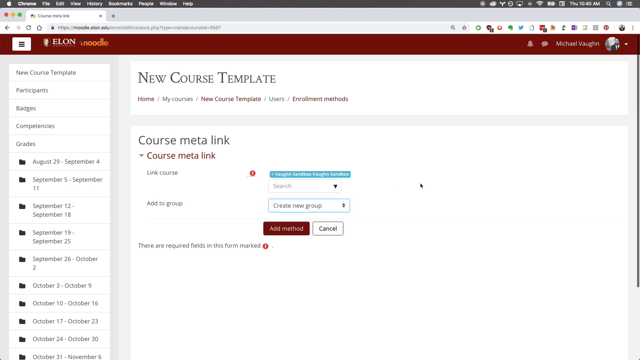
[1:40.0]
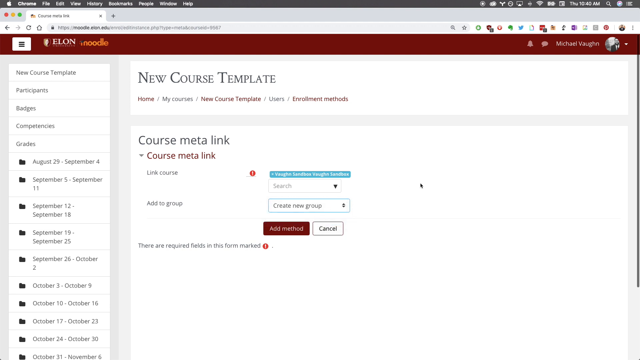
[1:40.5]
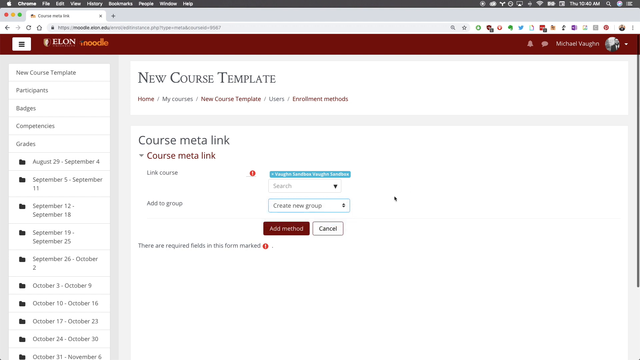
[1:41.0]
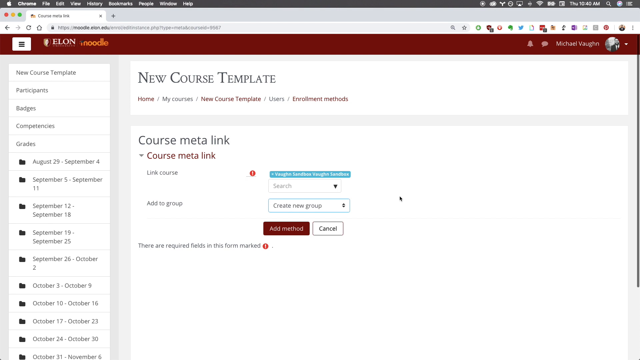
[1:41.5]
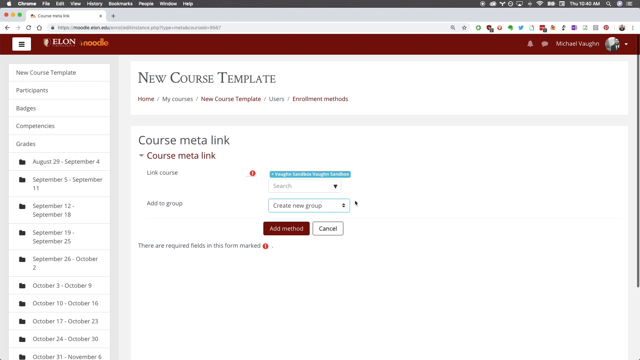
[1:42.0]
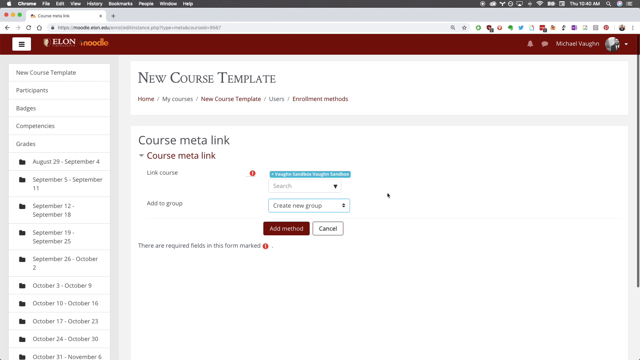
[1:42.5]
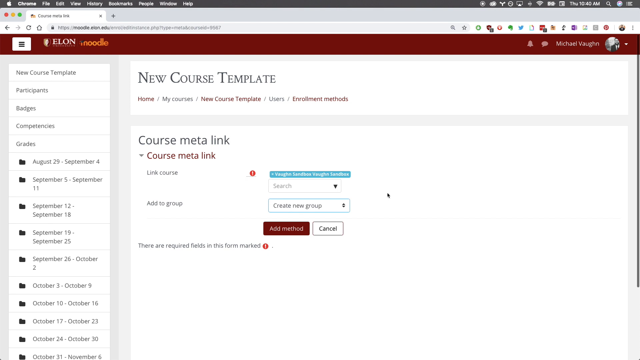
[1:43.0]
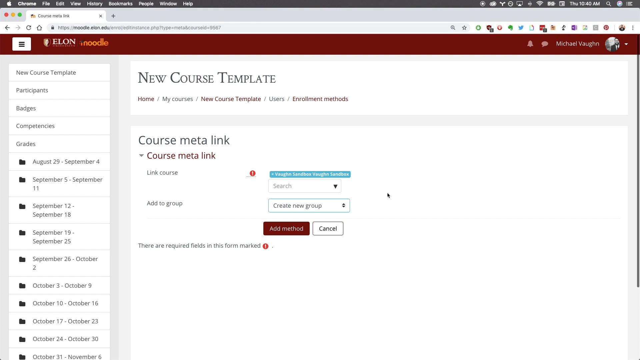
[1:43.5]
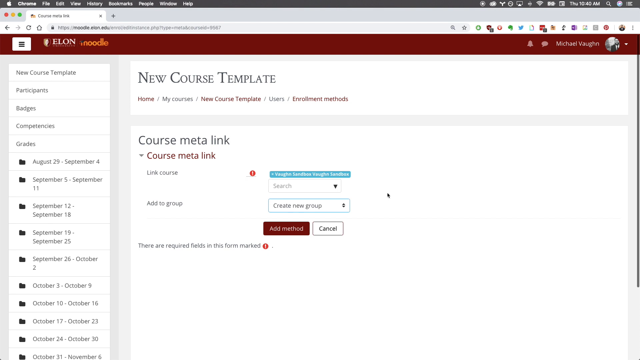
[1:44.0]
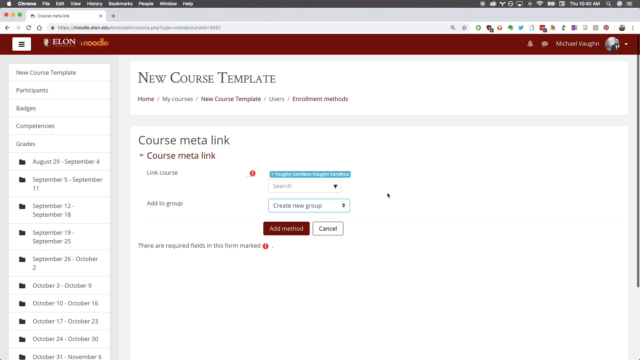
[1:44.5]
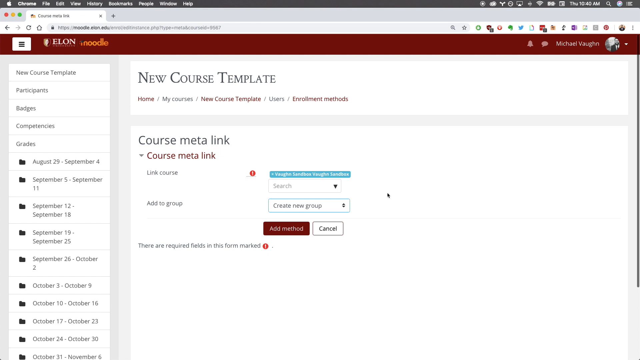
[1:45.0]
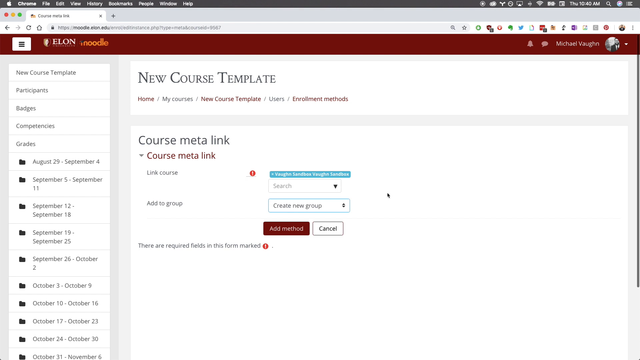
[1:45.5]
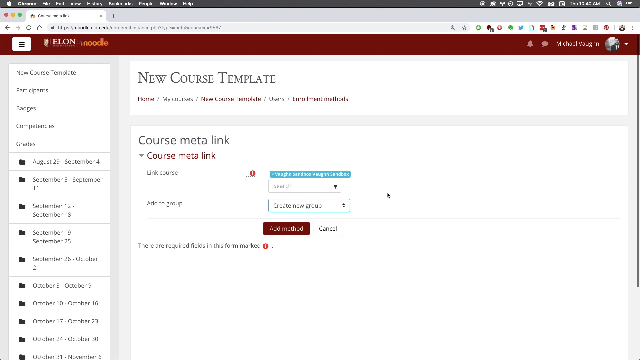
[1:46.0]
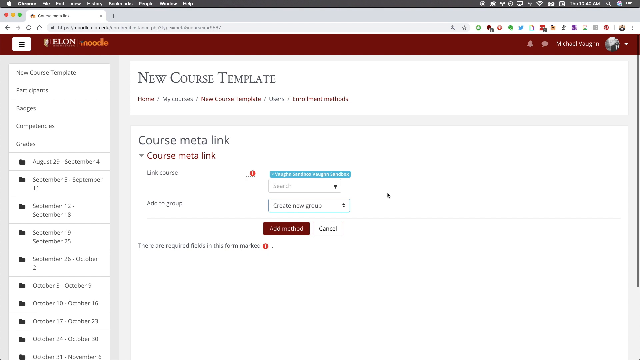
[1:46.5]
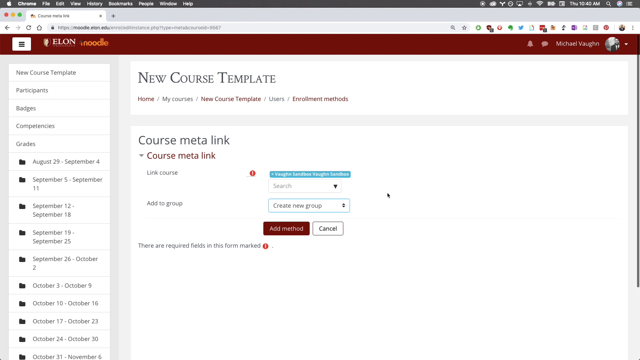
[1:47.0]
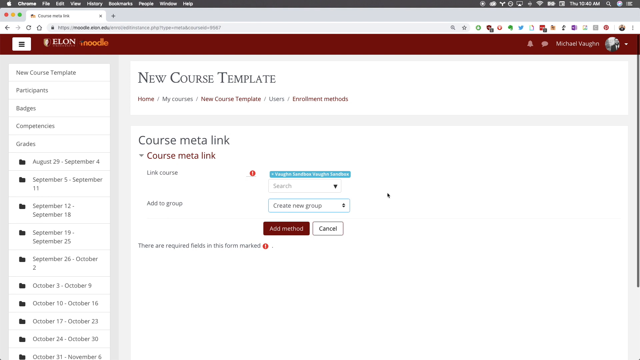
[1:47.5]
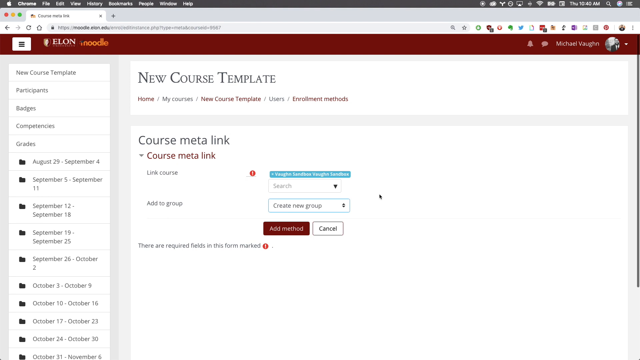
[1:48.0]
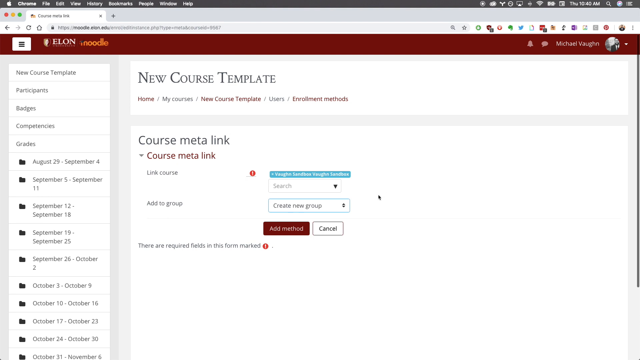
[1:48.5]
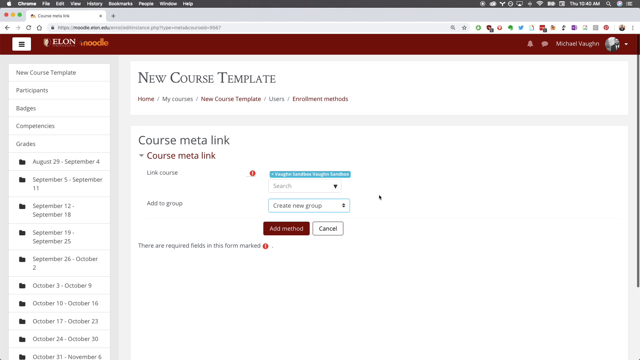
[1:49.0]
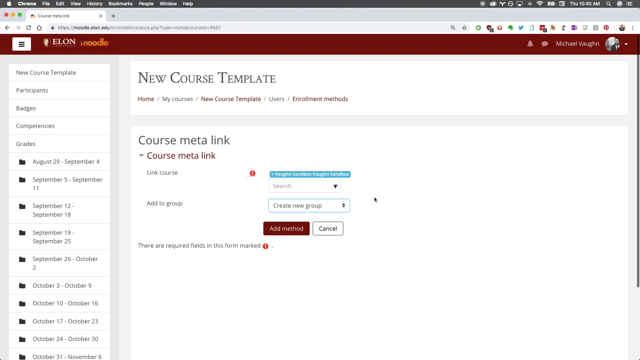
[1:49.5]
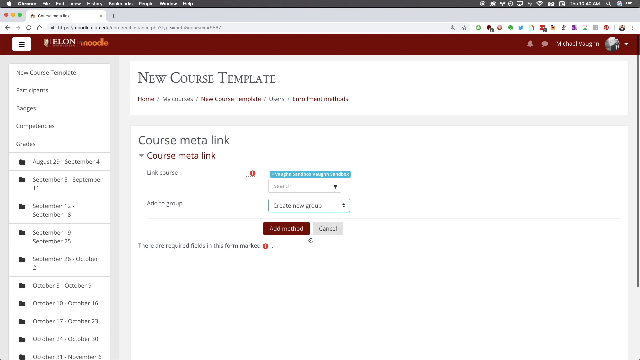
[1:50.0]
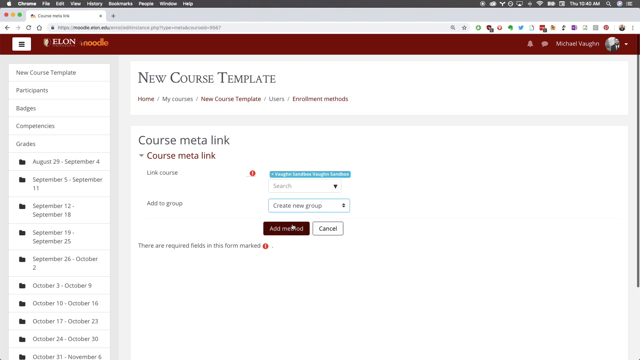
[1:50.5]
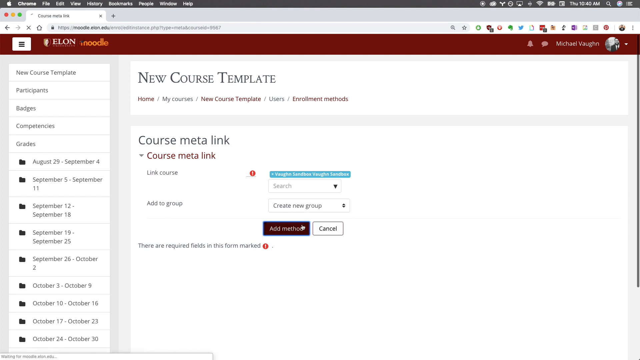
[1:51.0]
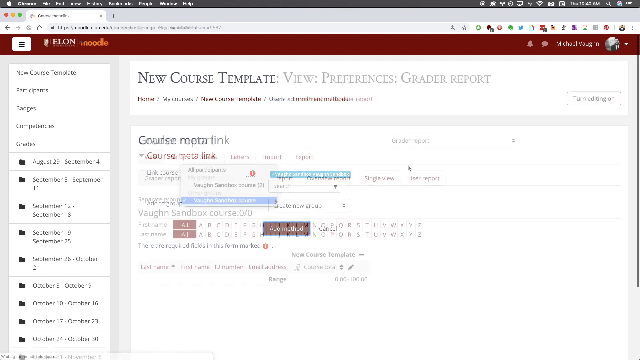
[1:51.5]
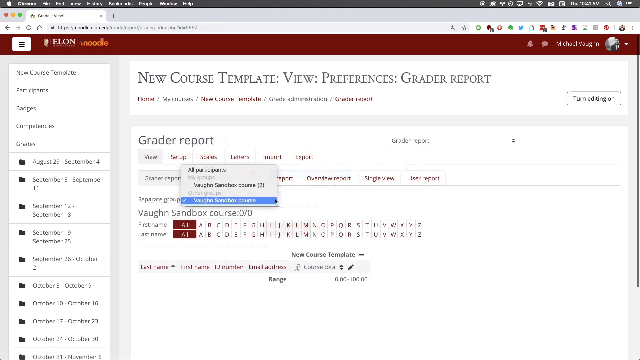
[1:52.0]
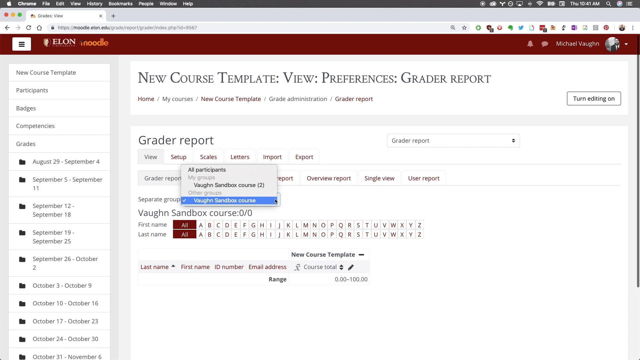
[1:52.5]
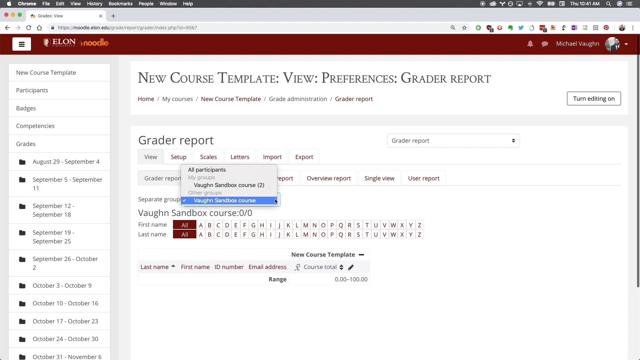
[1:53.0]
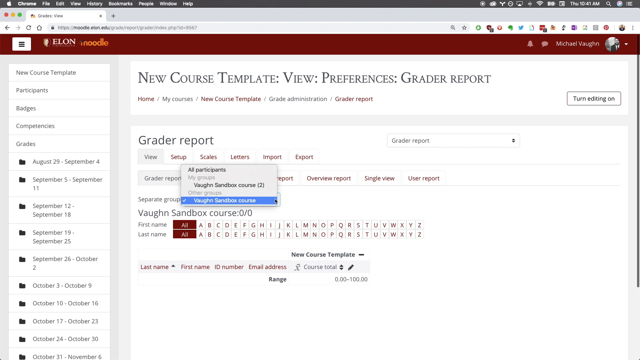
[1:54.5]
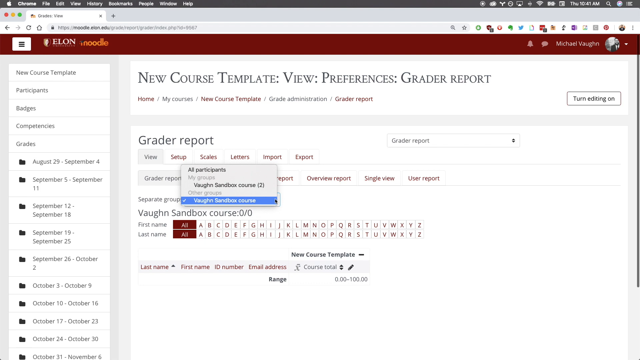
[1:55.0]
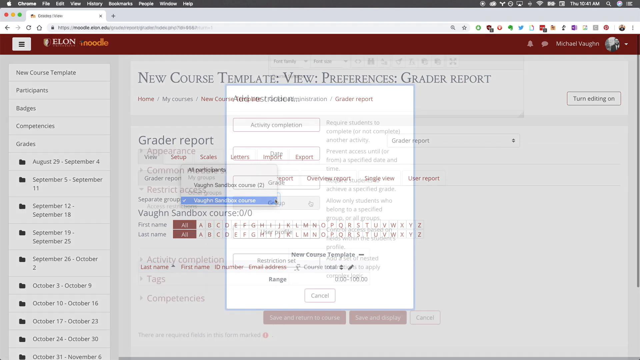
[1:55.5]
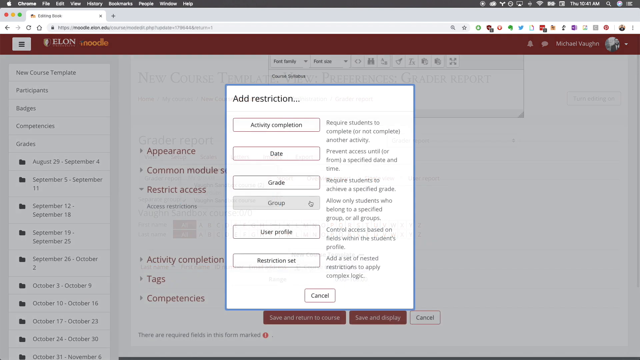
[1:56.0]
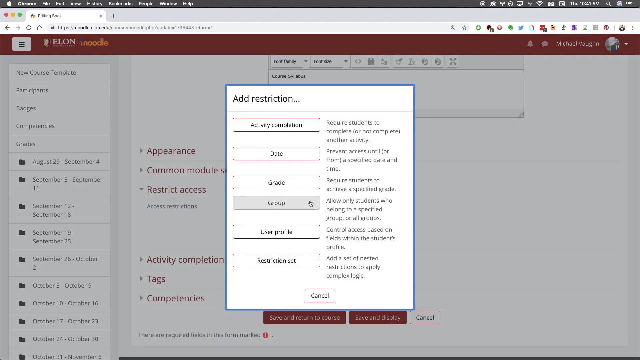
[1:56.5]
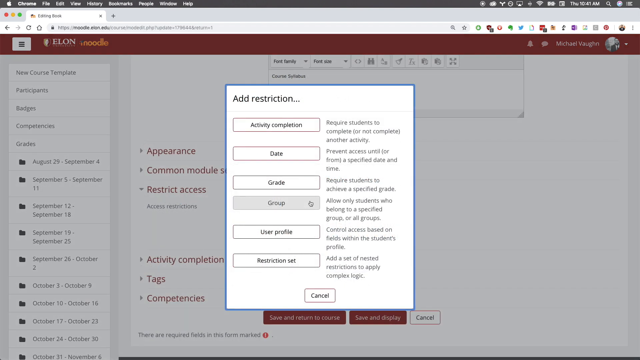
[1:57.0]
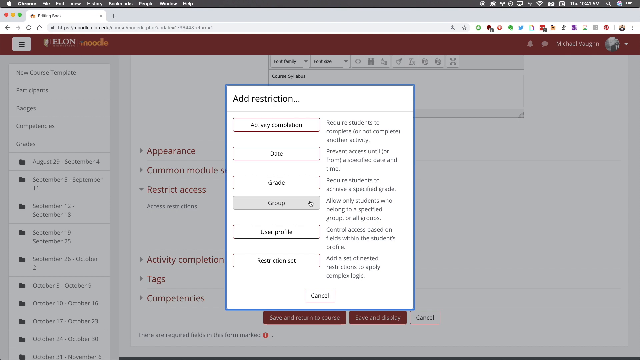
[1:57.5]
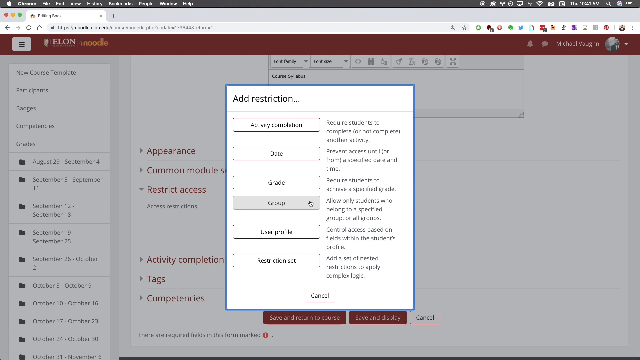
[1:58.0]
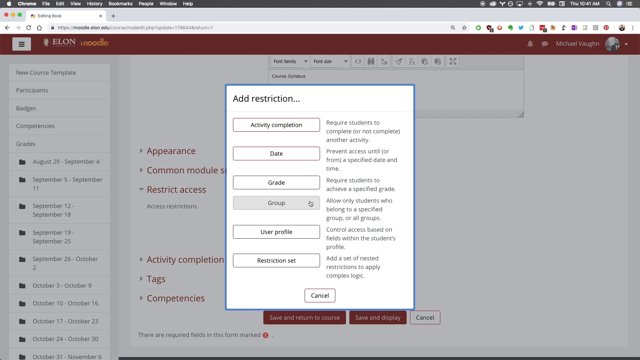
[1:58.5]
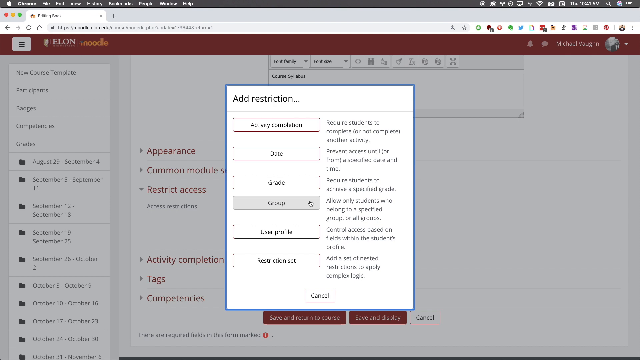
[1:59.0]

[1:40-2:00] The mouse moves around slightly in the middle right of the screen, then the user clicks the red "add method" button. This loads a new page that says "new course template", "view", "preferences" and "grader report". Underneath it says "grader report", with a table containing many tabs and selection boxes. The scene fades to a new screen saying "add restriction", a modal window with six drop-downs: activity completion, date, grade, group, user profile and restriction set. On the right is a short description of each: "Activity Completion requires students to complete or not complete another activity." "Date. Prevent access until or from a specified date and time." "Grade. Requires students to achieve a specified grade." "Group. Allow only students who belong to a specified group or all groups." "User Profile. Control access based on fields within the student's profile." "Restriction Set. Add a set of nested restrictions to apply complex logic." The mouse hovers over the group button. There is also a cancel button at the bottom.